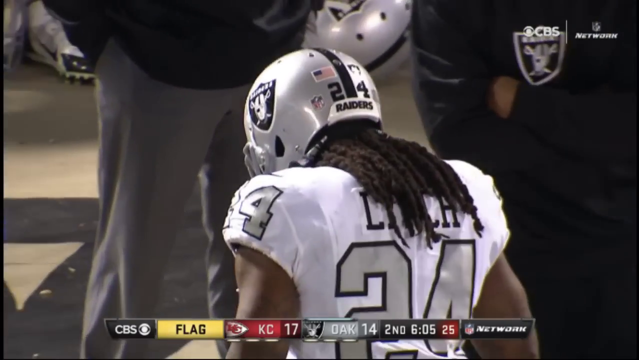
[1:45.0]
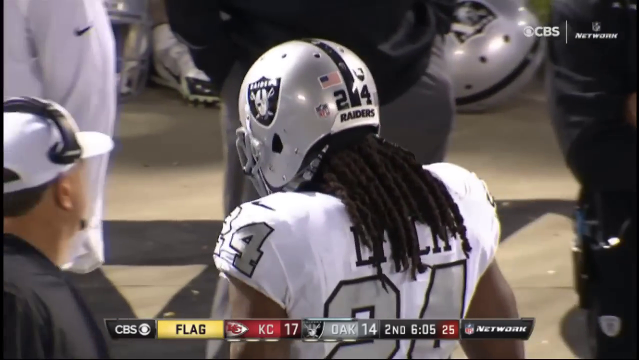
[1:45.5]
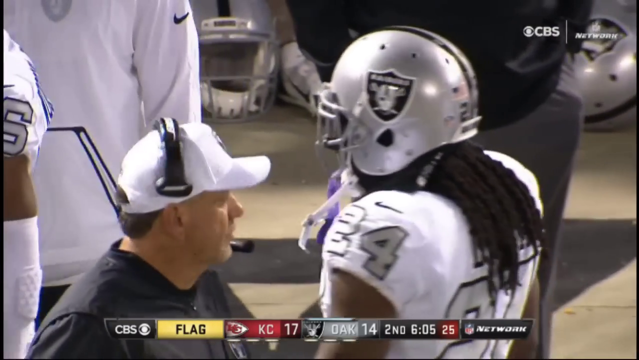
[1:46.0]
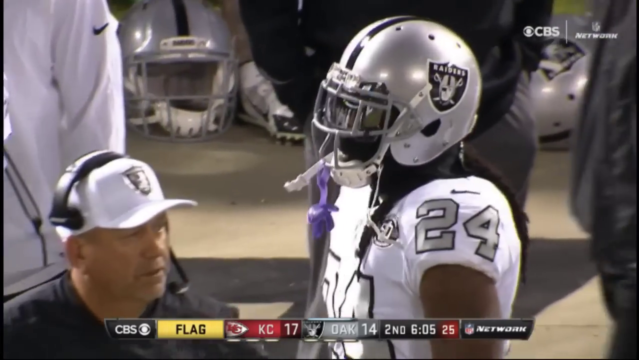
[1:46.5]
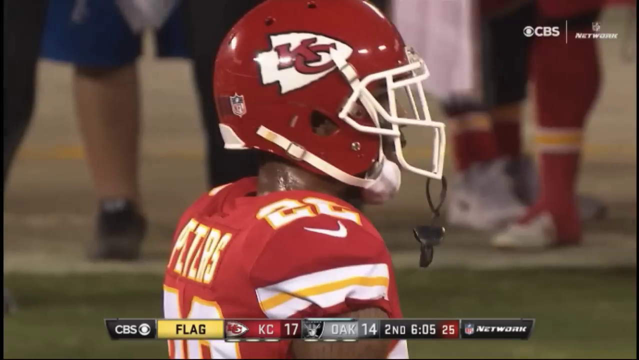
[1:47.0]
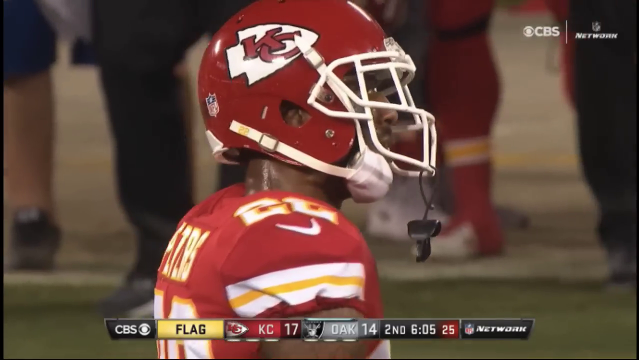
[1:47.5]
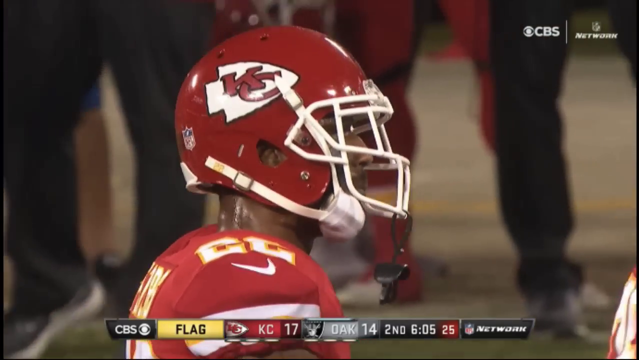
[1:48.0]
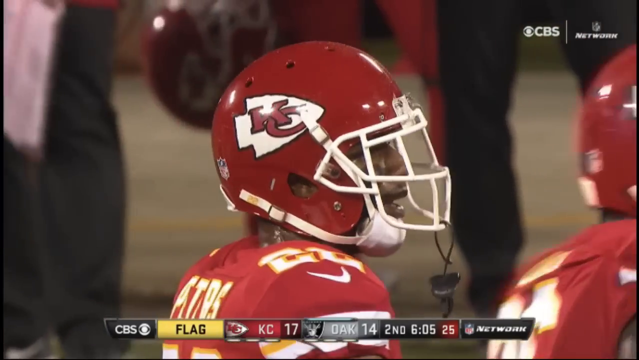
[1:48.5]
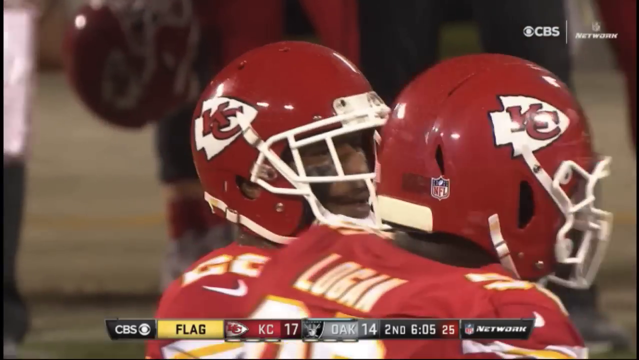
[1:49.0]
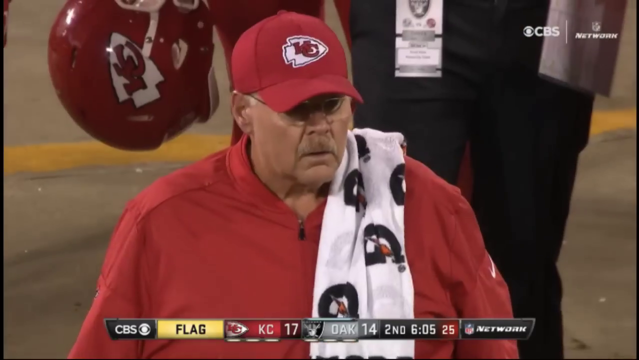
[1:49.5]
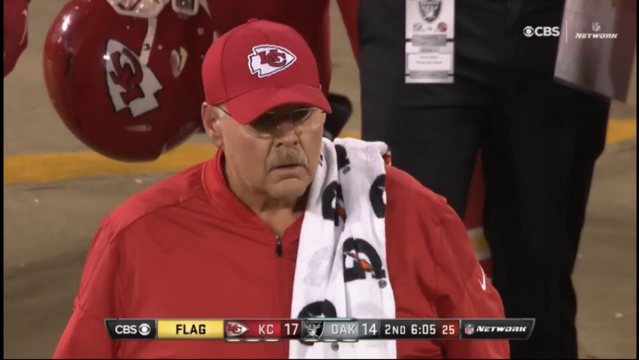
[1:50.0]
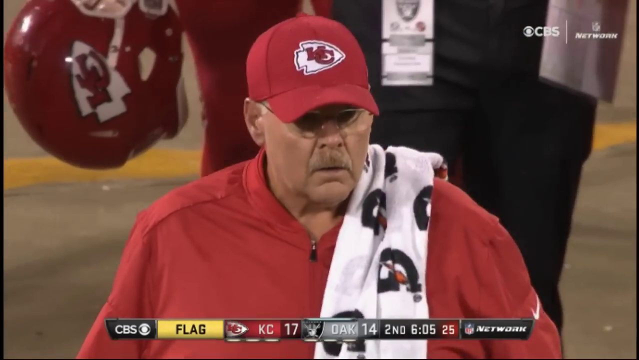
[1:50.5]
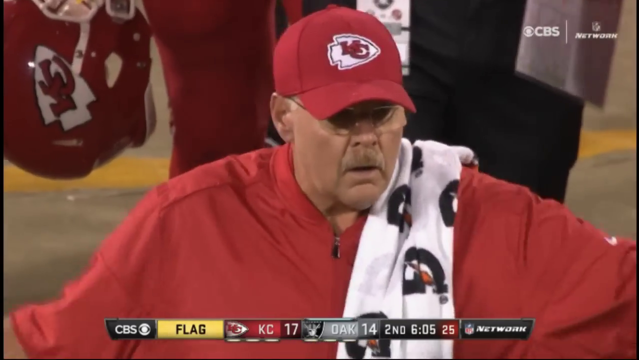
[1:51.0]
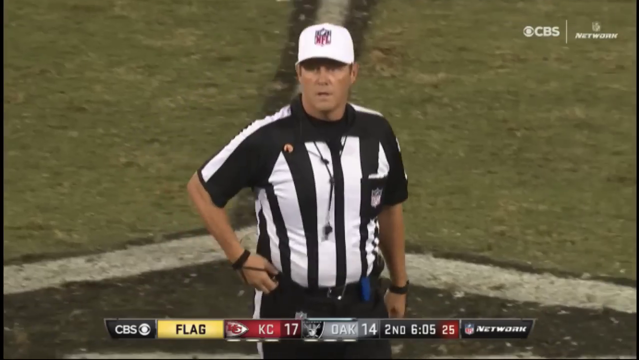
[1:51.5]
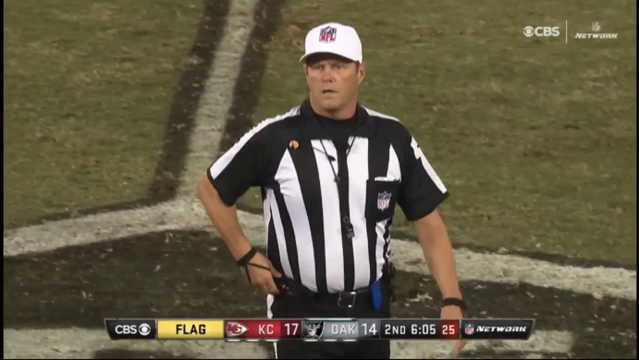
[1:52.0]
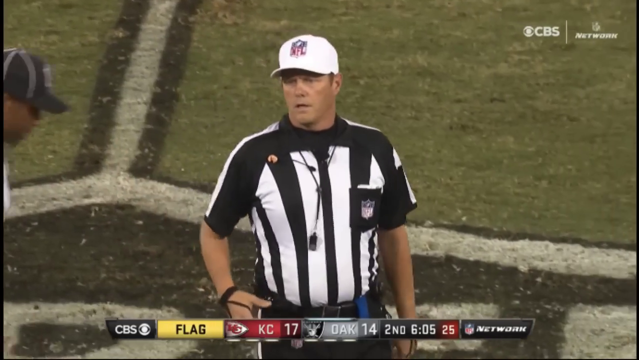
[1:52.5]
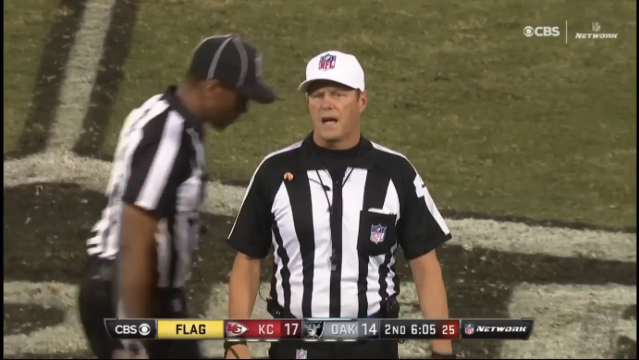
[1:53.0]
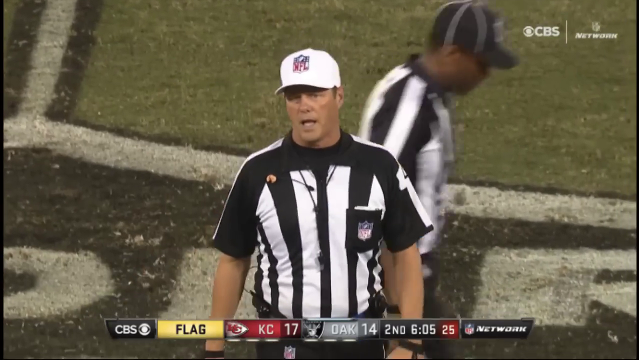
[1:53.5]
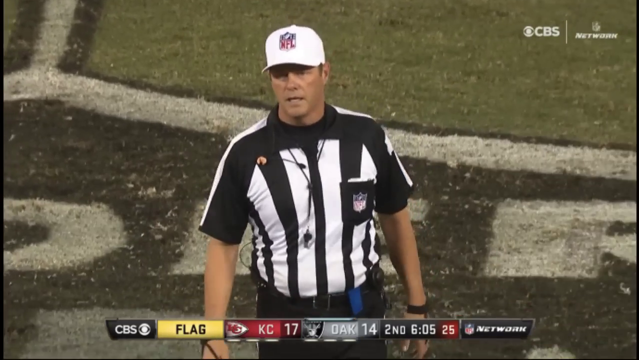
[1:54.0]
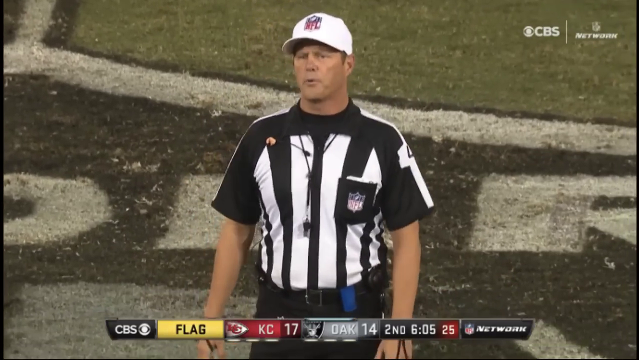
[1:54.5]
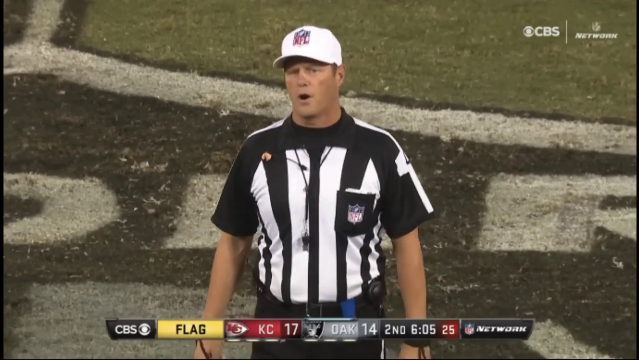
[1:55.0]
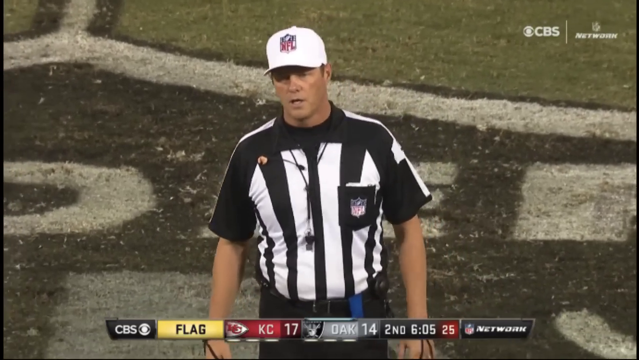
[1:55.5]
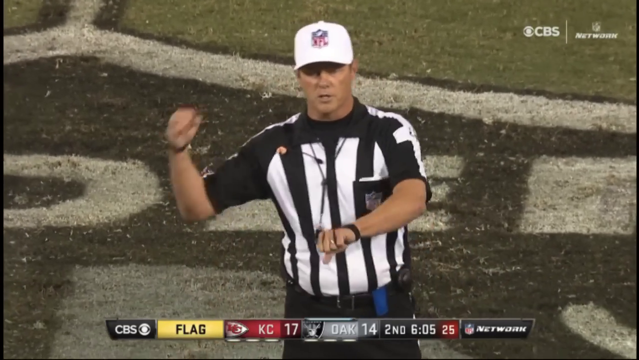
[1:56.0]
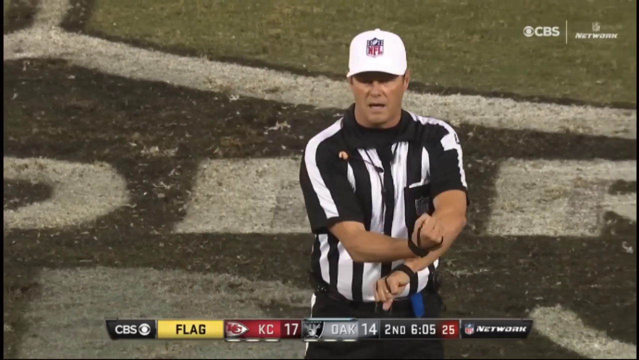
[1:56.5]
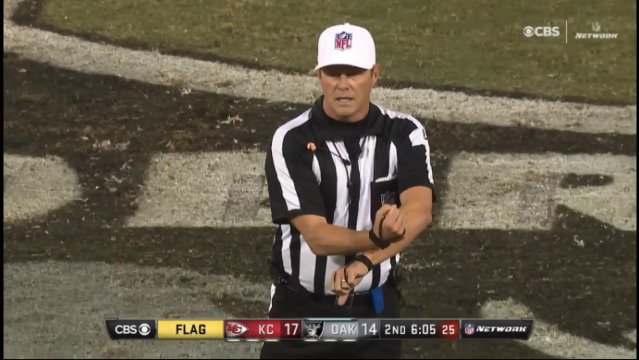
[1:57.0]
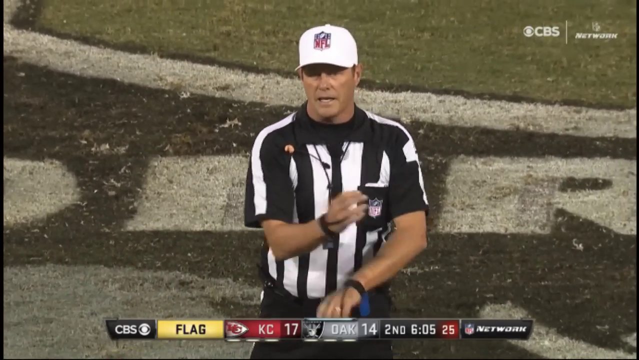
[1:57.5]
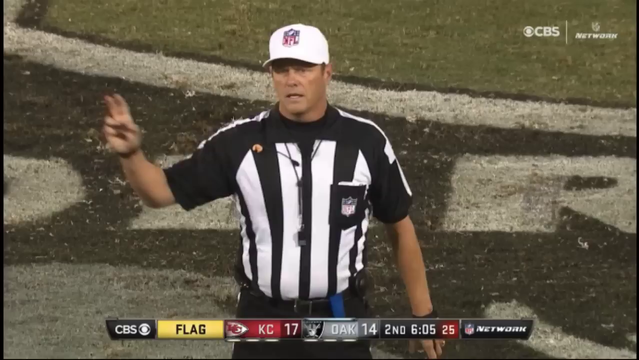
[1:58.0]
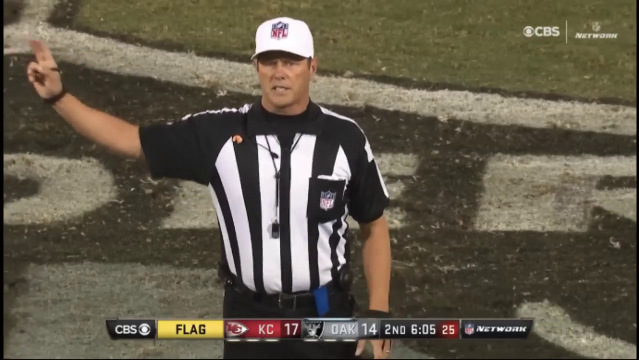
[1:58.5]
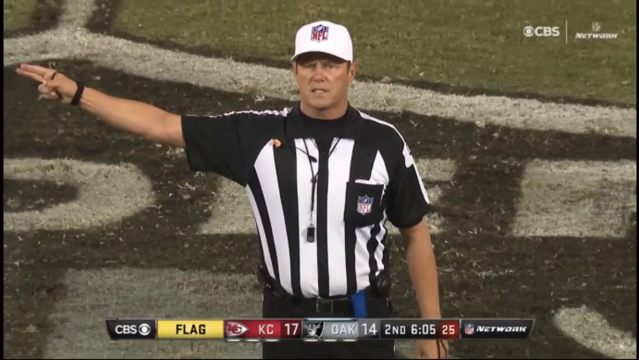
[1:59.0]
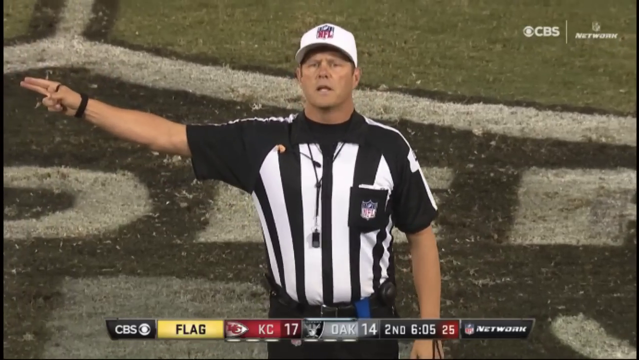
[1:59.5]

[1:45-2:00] The video is titled Marshawn Lynch Gets Ejected for Grabbing a Referee, Chiefs vs Raiders NFL. A traditional football play leads to an altercation between the Chiefs and the Raiders players, during which number 24 on the Raiders grabs at one of the referees. That referee throws up a yellow flag to call the play. More referees enter the field to separate the Chiefs from the Raiders. Number 24 of the Raiders leaves the field after the yellow flag. In a split screen, the referees discuss the altercation on the left while an up-close shot of the initial Chiefs-Raiders altercation plays, followed by an up-close shot of number 24 grabbing at the referee. The coaches on the sidelines discuss what is going on with their players and the referees, and finally the referee comes out using hand signals to announce the final play call.